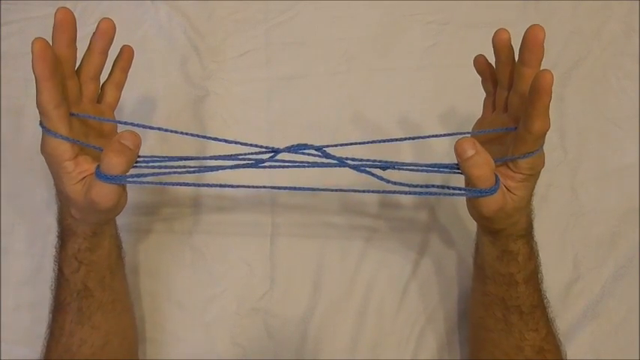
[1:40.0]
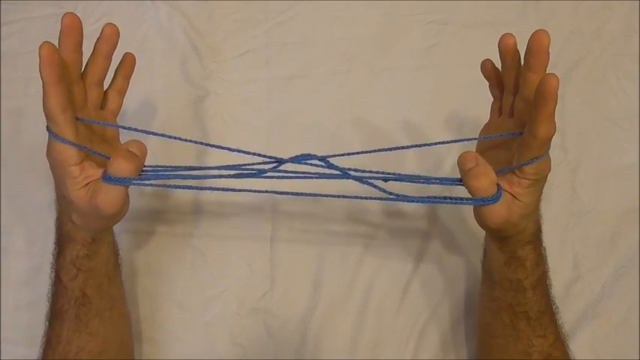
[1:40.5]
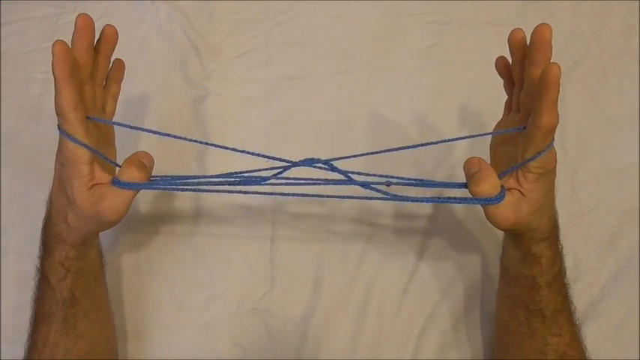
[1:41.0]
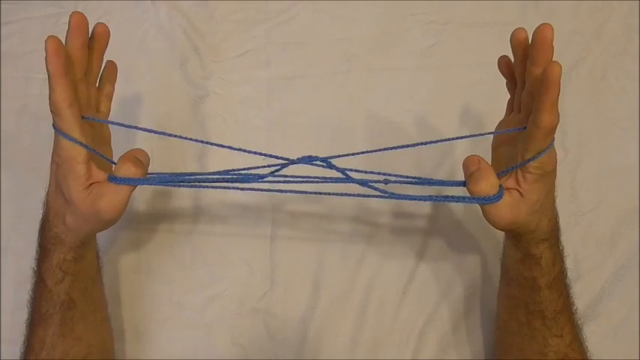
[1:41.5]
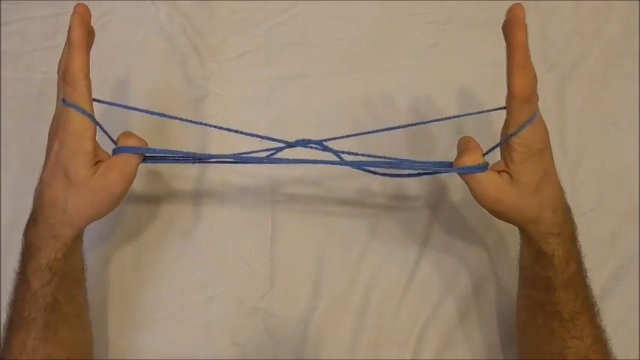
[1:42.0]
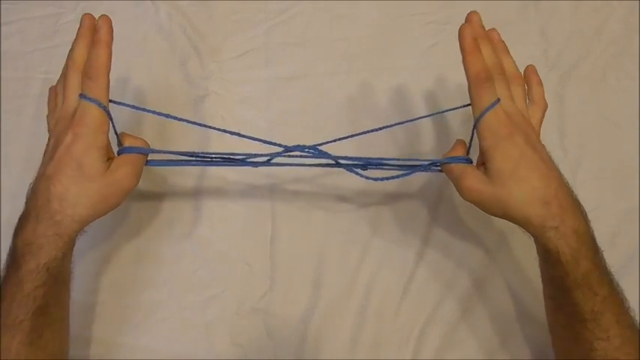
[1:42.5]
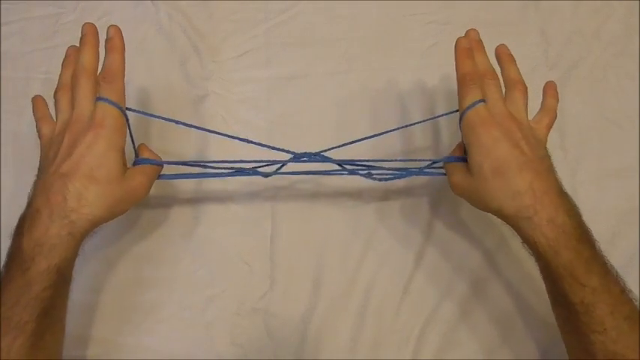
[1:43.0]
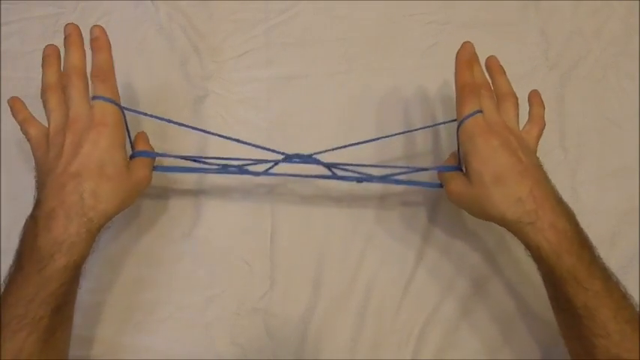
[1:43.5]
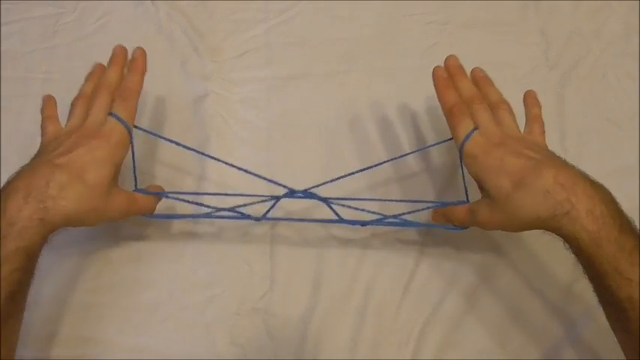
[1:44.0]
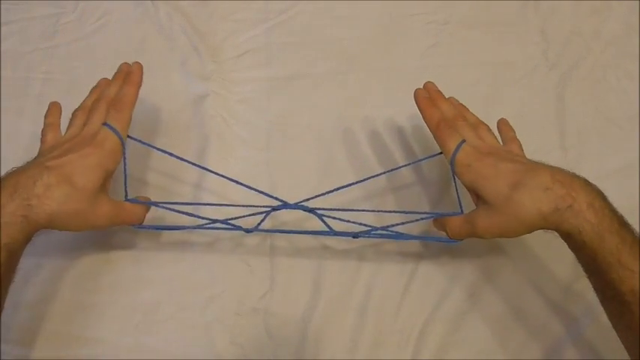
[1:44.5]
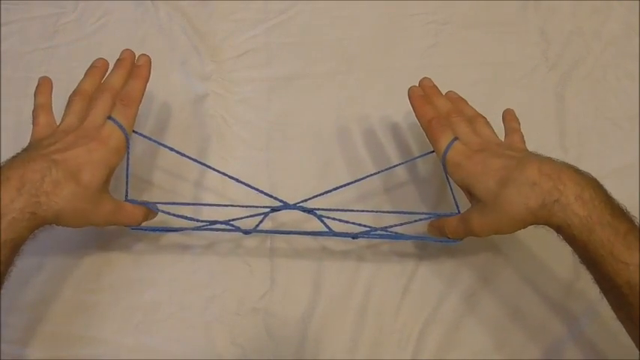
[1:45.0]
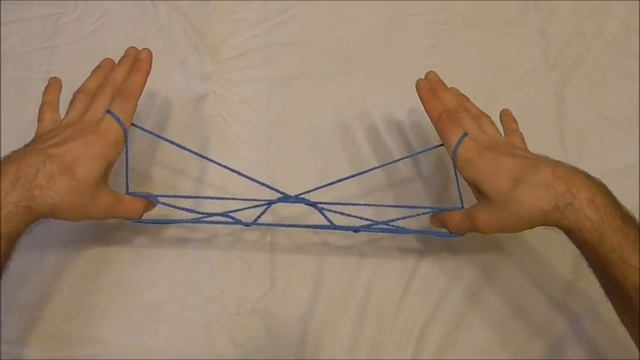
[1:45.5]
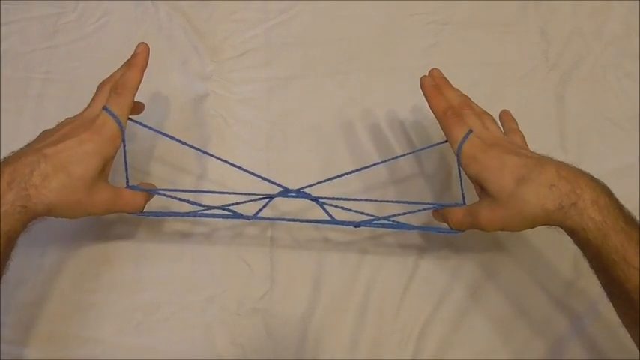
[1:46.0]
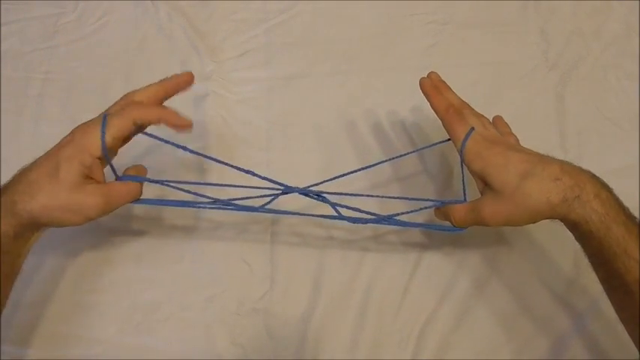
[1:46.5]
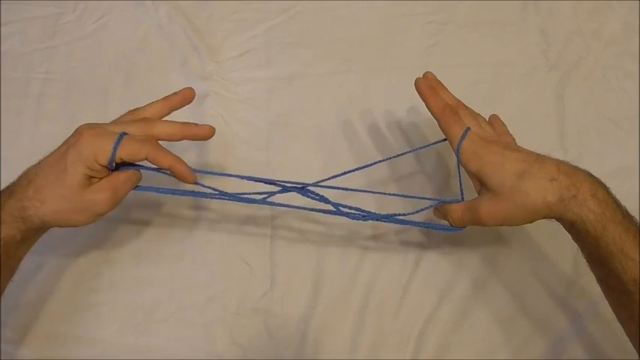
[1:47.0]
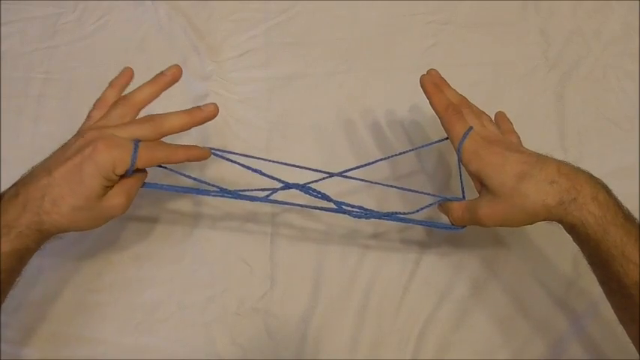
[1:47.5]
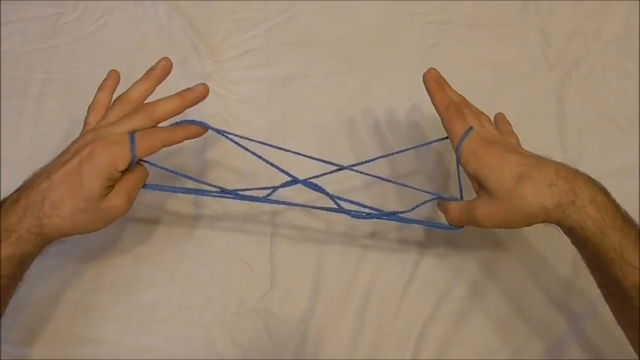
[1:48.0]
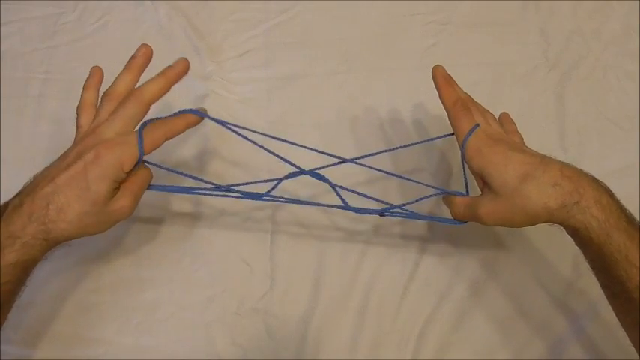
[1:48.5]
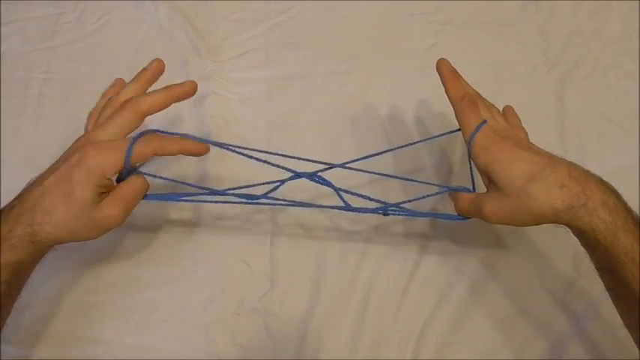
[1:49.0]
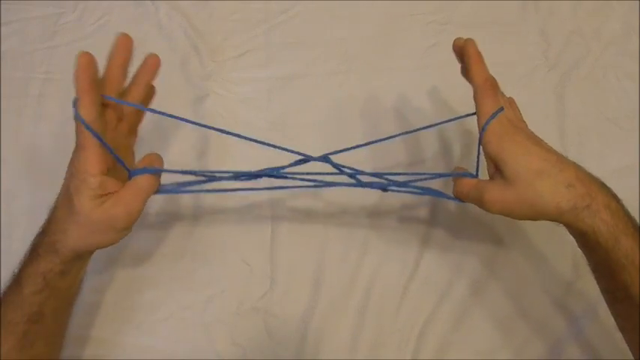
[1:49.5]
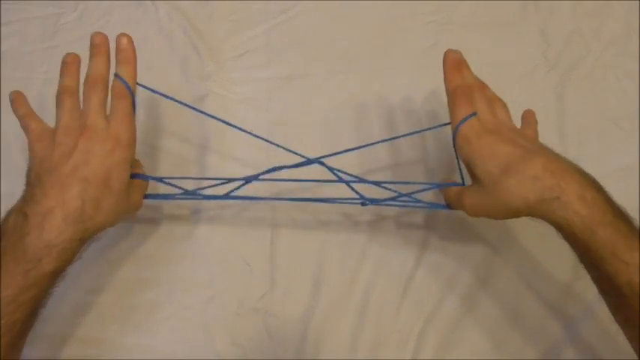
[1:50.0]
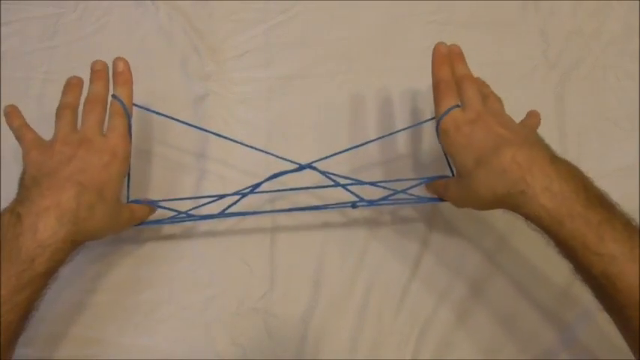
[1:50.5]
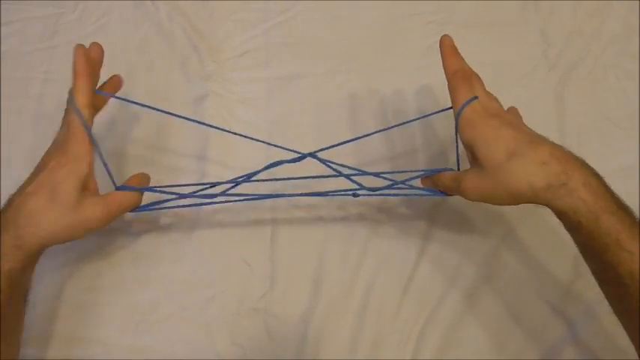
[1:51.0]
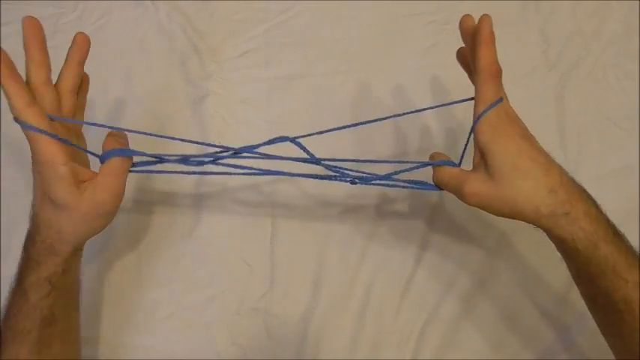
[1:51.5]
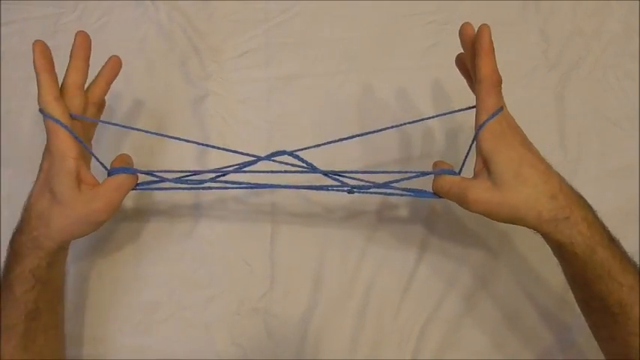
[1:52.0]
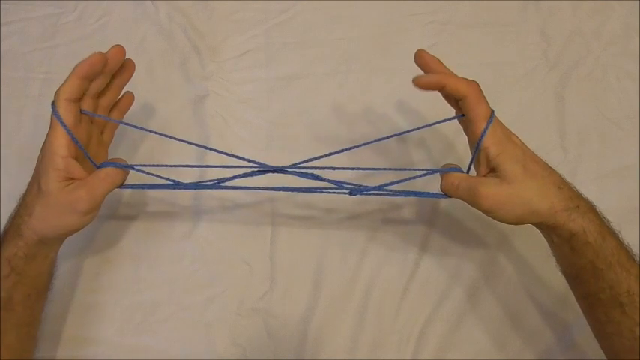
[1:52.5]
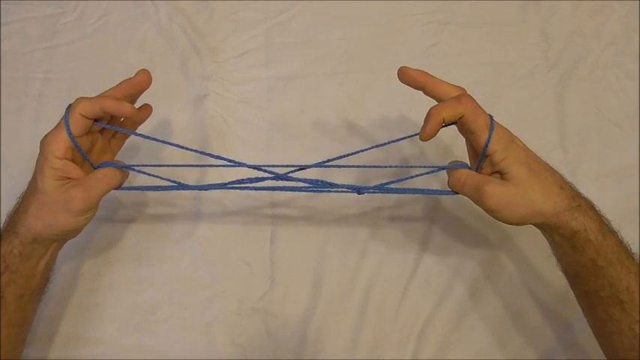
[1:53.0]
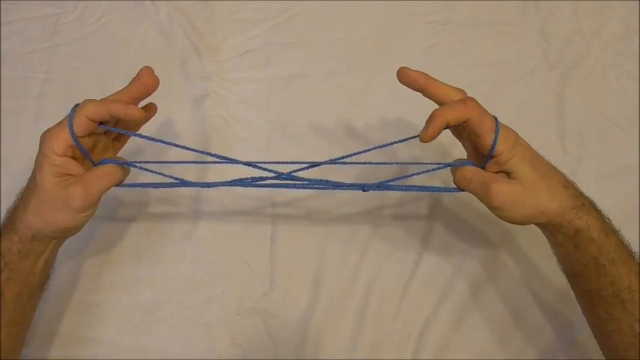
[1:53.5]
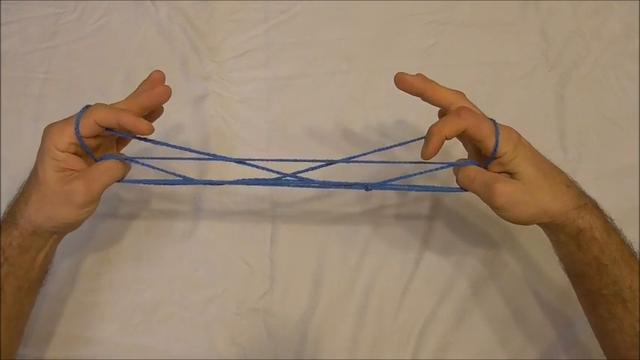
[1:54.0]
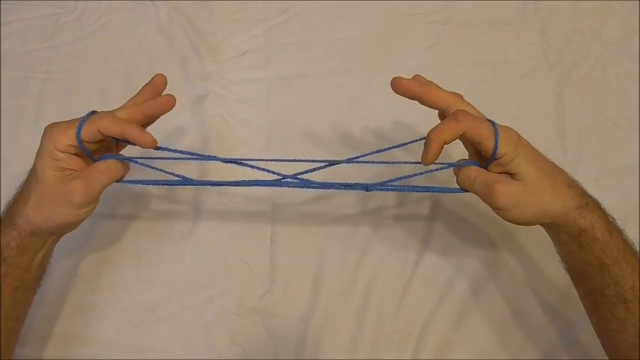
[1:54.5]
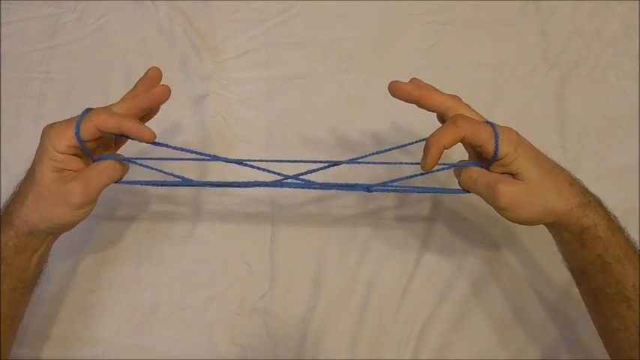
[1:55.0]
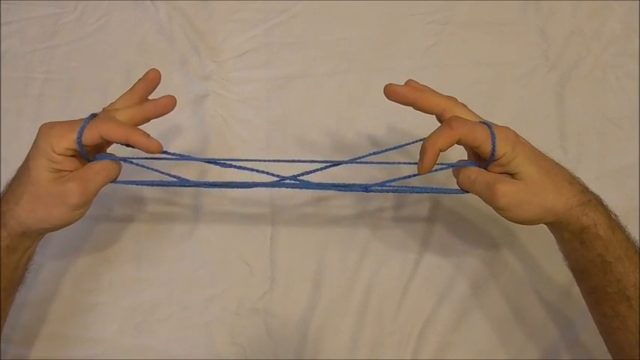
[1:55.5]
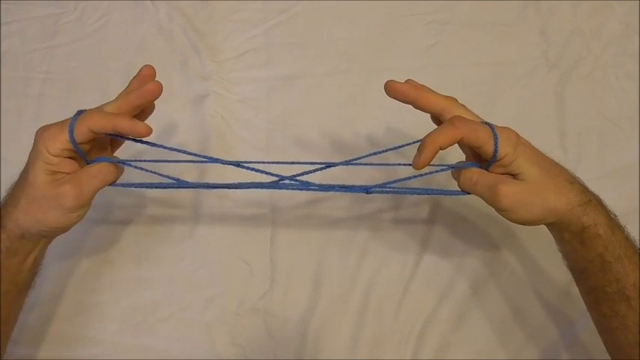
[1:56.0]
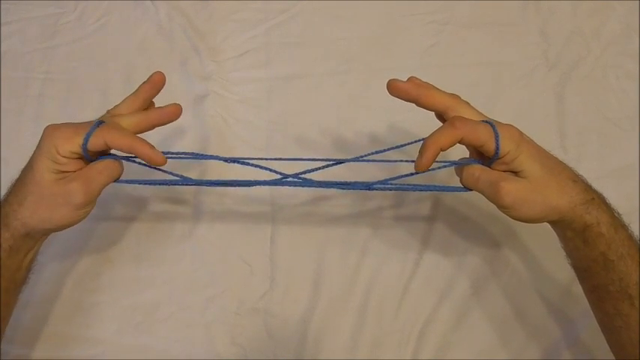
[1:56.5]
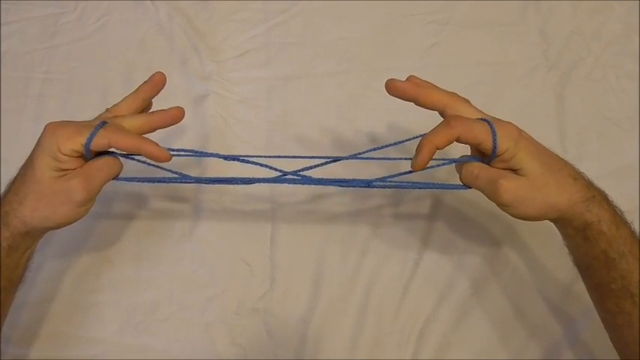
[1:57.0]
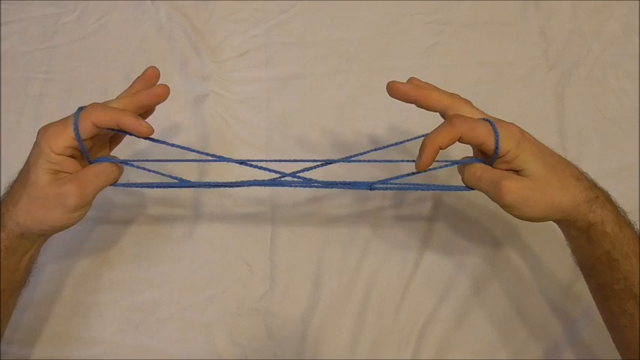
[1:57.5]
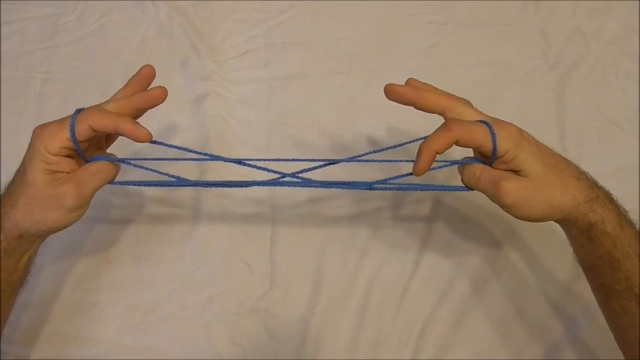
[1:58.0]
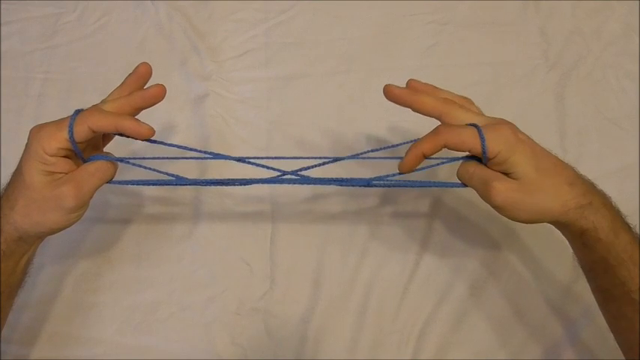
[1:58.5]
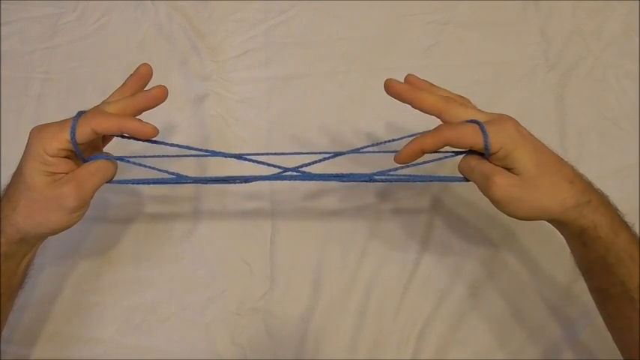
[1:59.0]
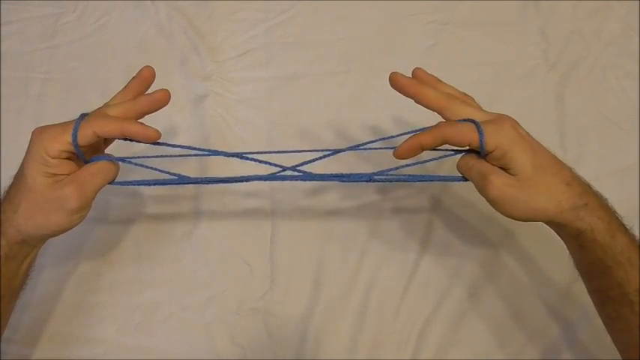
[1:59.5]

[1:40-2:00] The white man with hairy arms is fairly tan. He seems to be showing another step in making the figure. He uses the pointing finger of his left hand to bind the string, then does the same with his right hand. He then appears to point with his right hand at a string, seemingly indicating which string to grab next. The string is blue and fairly thin; it is a string, not a rubber band. At times he shows how he takes his pointing finger and appears to tuck it under two strings, as an example of how that move is made. He moves his right hand more, kind of pointing to a diagonal string on the right, apparently pointing towards the next step.